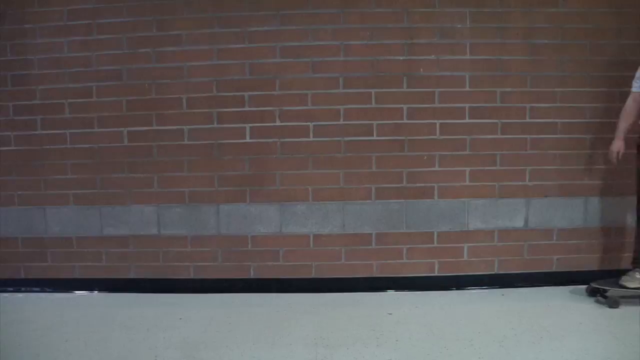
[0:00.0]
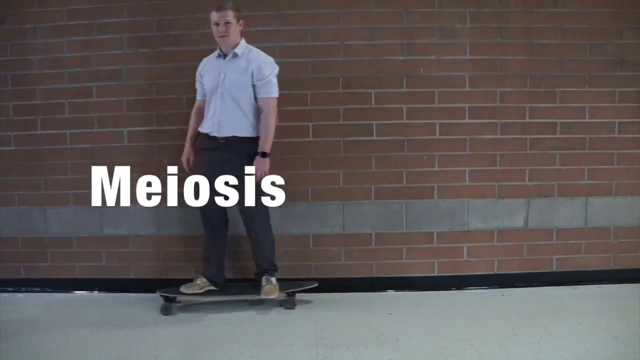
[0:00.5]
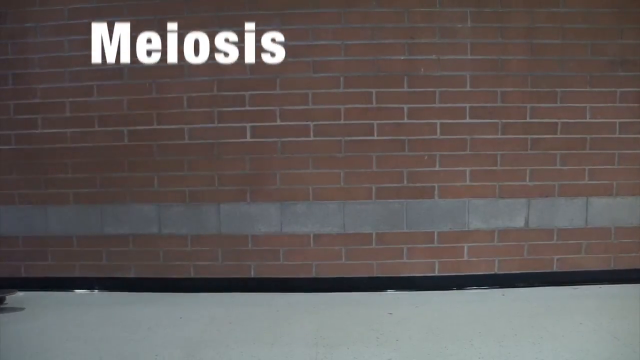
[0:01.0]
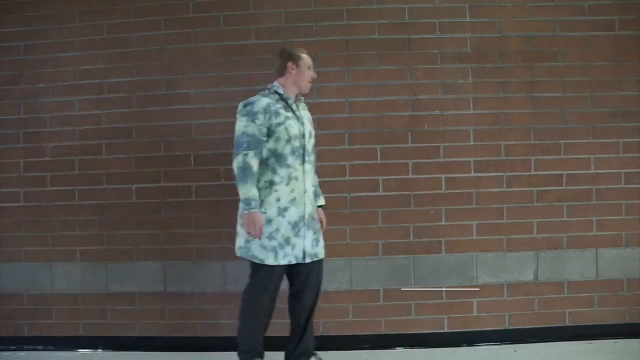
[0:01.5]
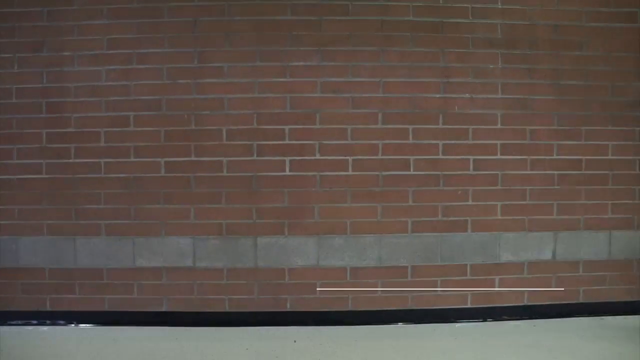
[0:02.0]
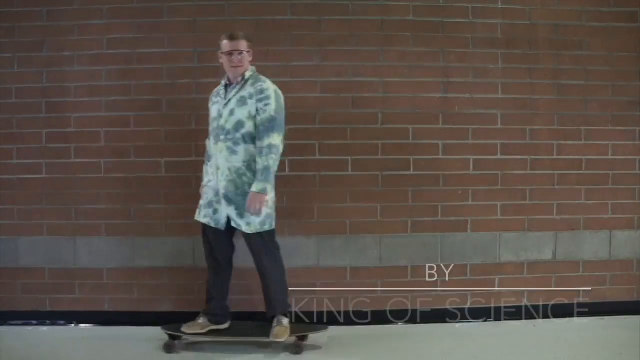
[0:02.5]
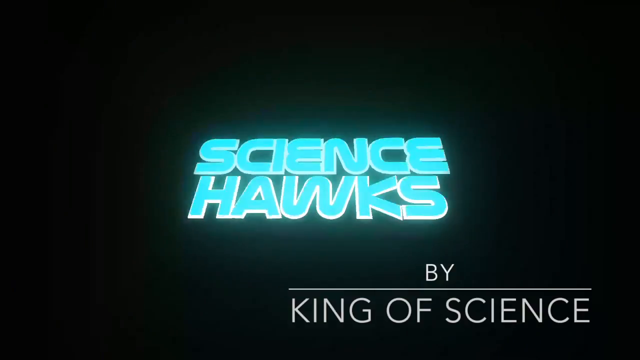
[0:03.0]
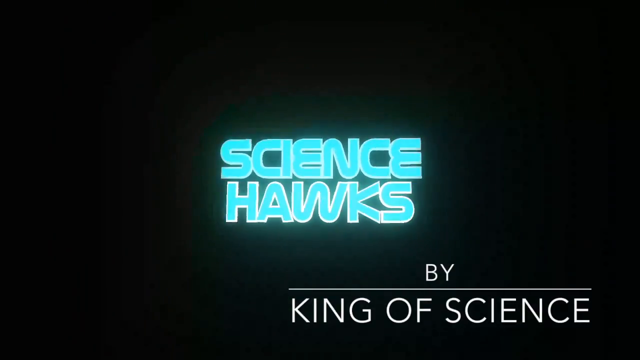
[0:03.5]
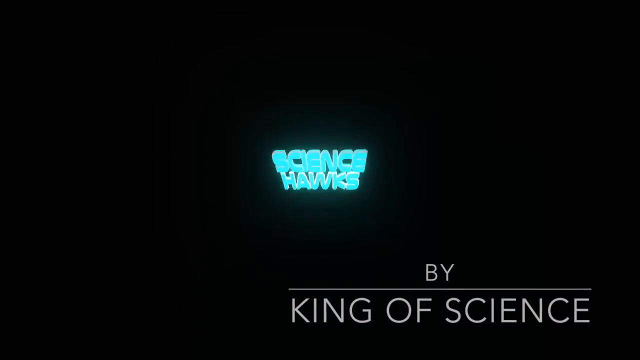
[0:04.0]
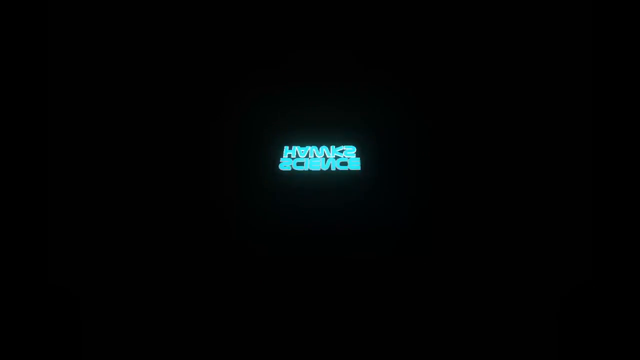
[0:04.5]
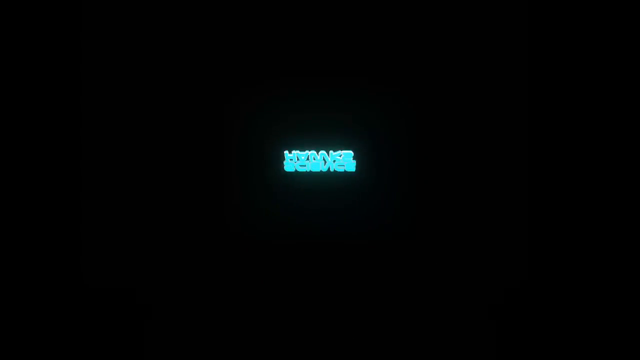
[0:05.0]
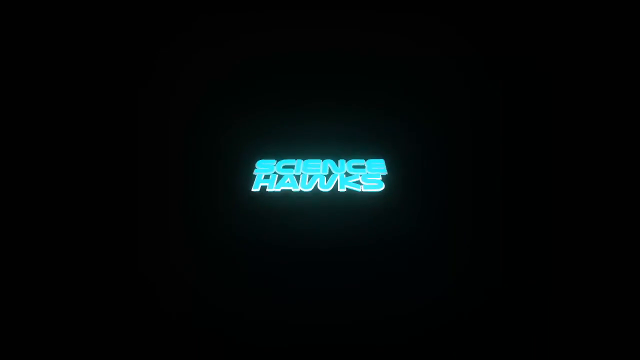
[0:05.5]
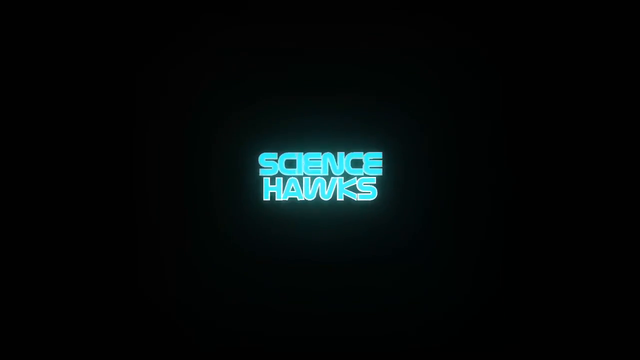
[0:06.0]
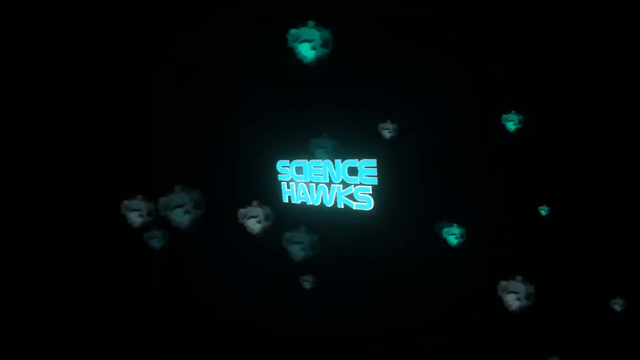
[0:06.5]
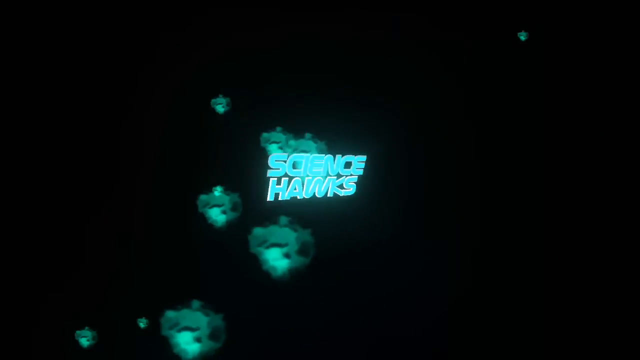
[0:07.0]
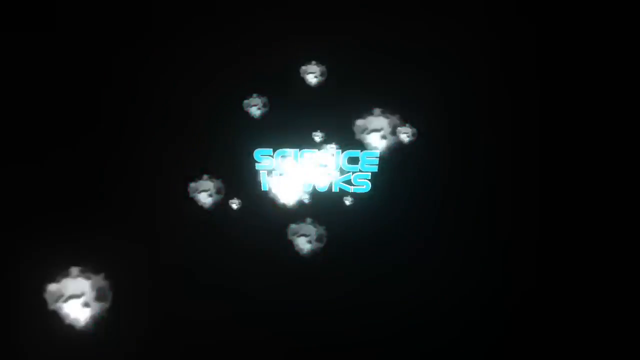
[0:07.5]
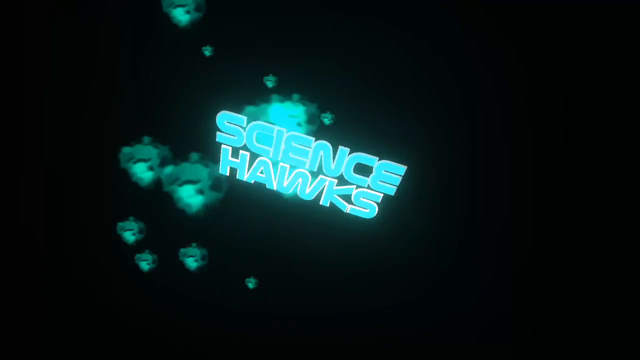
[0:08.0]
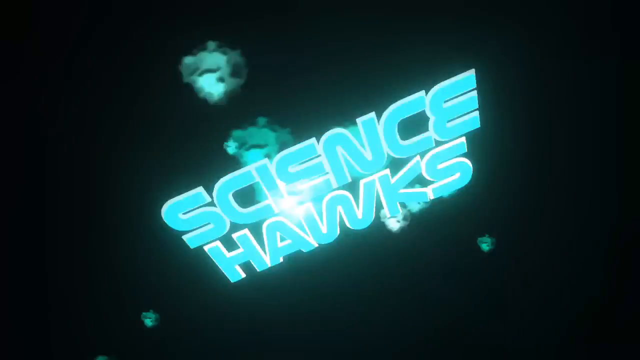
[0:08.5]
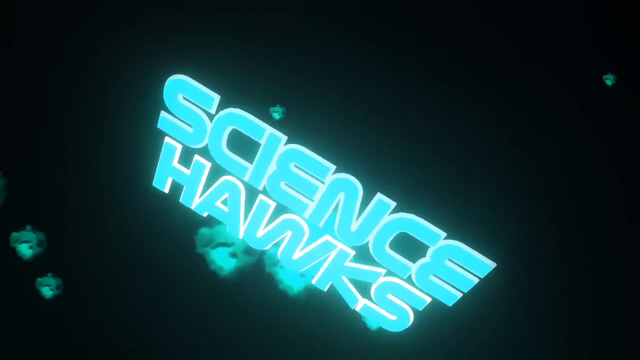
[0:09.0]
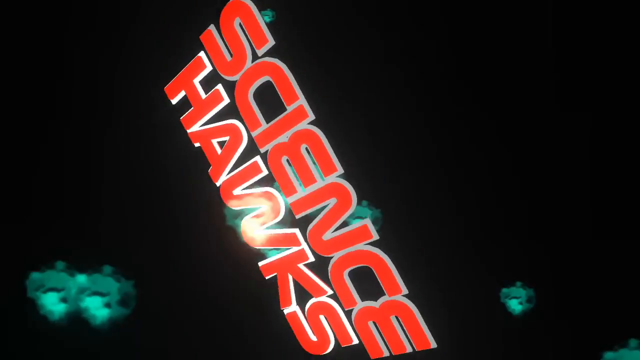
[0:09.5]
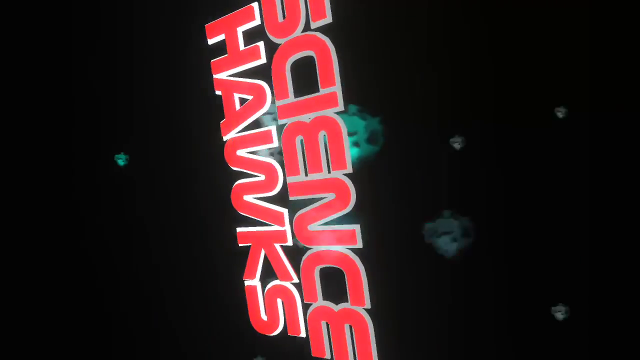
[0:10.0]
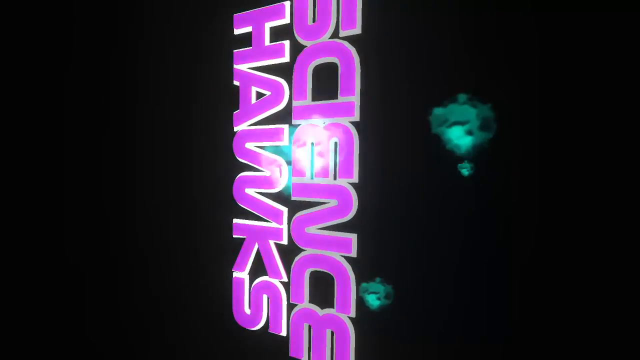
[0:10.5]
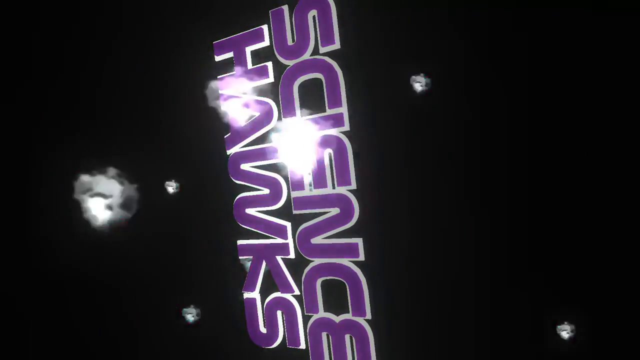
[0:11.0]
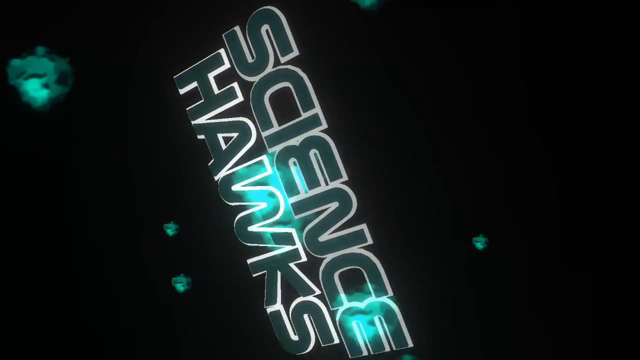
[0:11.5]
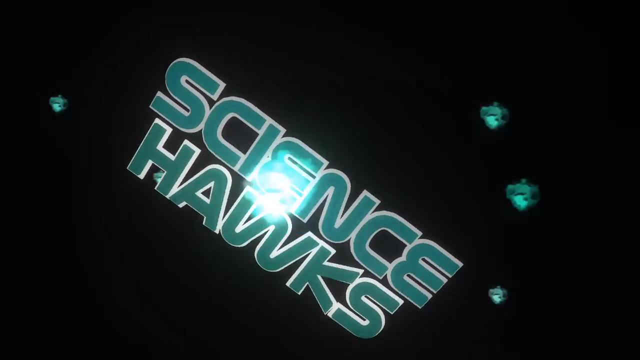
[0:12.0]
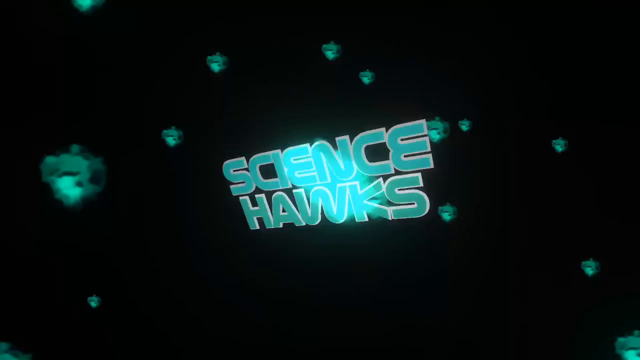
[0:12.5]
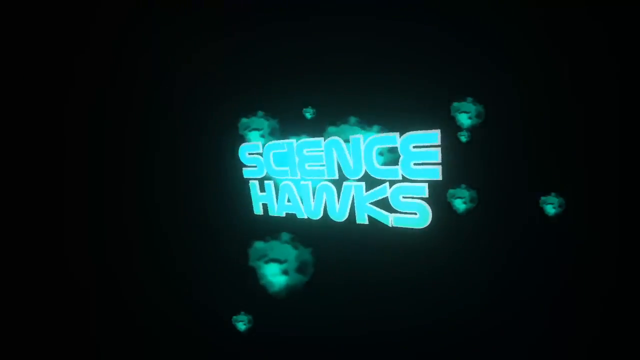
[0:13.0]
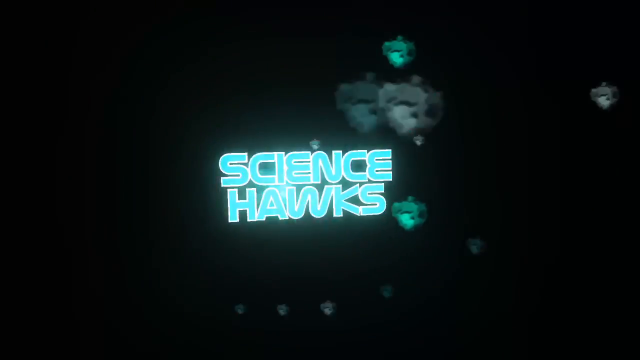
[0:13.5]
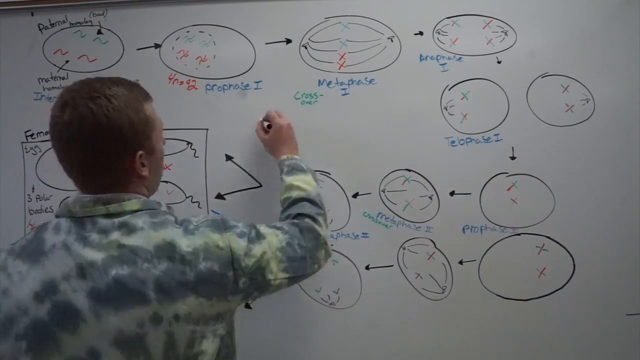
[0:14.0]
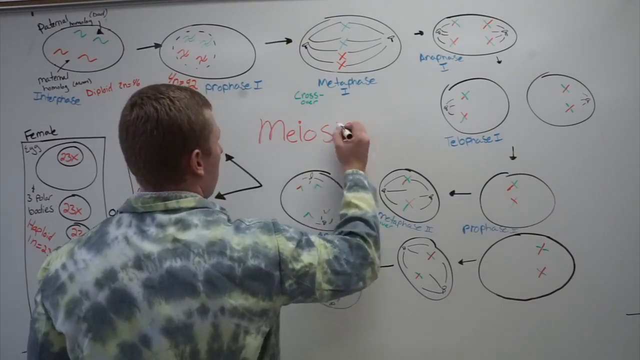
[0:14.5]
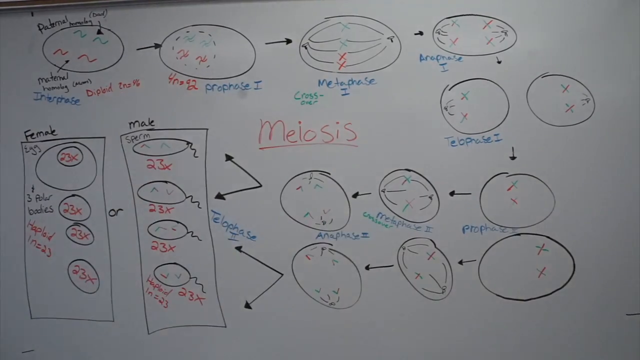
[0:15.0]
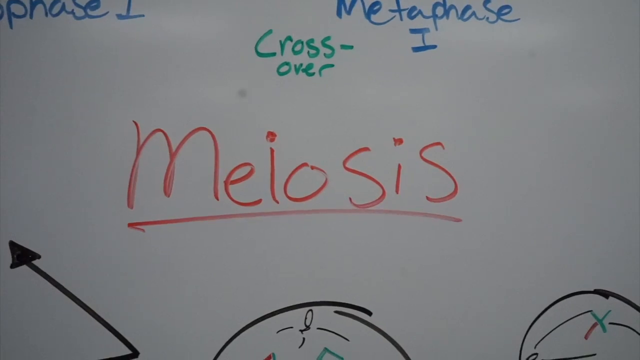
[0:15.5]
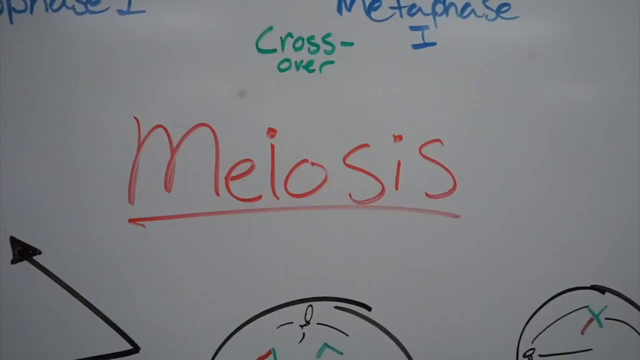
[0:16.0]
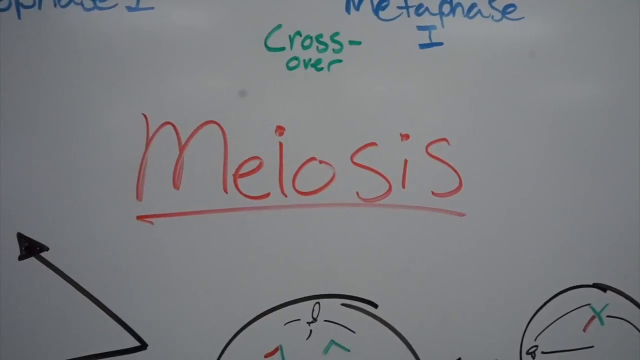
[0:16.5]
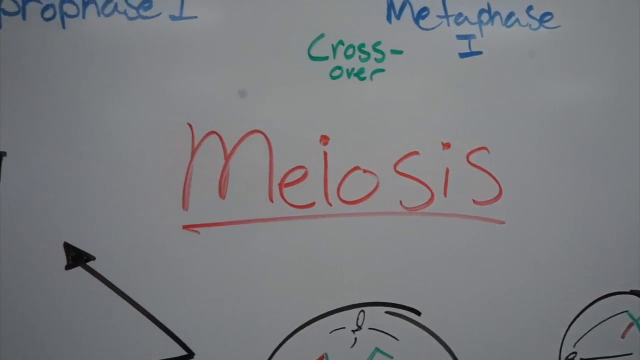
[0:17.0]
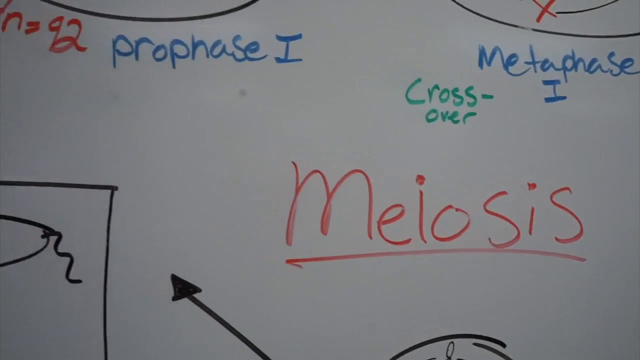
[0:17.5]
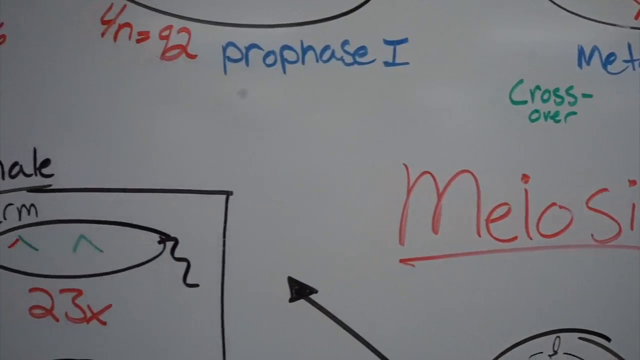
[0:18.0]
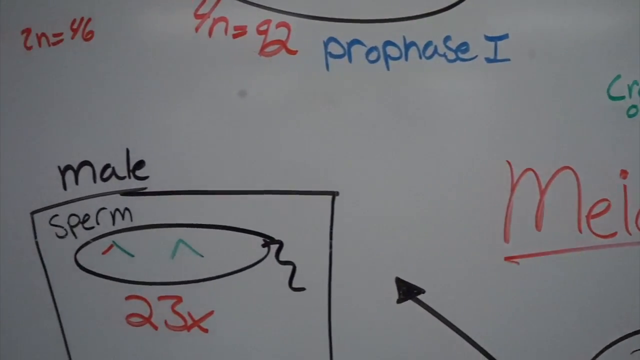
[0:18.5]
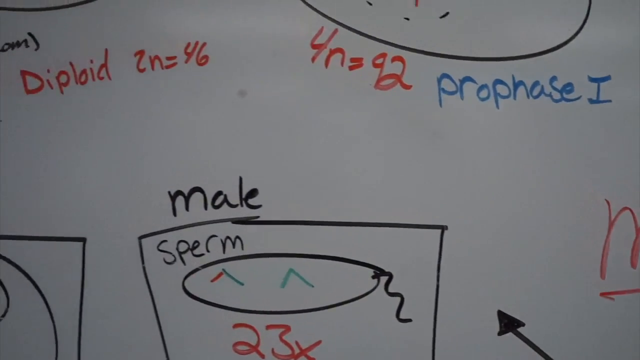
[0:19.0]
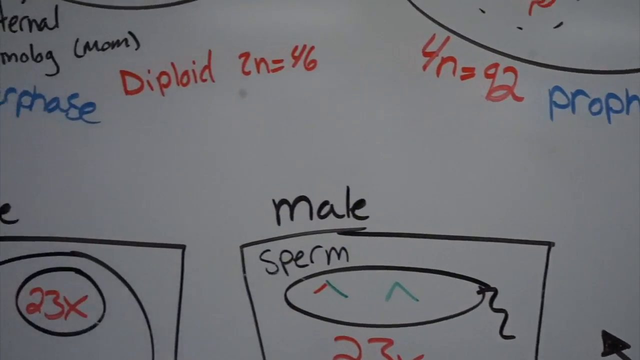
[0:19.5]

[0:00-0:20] The video opens on a black wall, and suddenly a person on a skateboard appears. The word "meiosis" appears, followed by "science hawks", with horns in the background. The "science hawks" title moves sideways and forwards; it starts out in teal and then turns different colors, and "by king of science" appears at the bottom. Next, someone writes in fast motion, the footage sped up, using dry erase markers in several different colors. The writing says "meiosis", spelled M-E-I-O-S-I-S, and shows something like a male sperm, with "male" written on the right and "female" on the left. A drawing is labeled "maternal", with some squiggles and the words "Homologue" and "mom". Also written are "interphase", a "diploid" label equal to 46, and on the right "4n = 92".